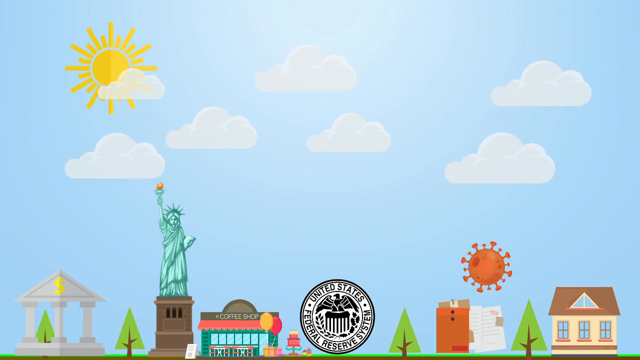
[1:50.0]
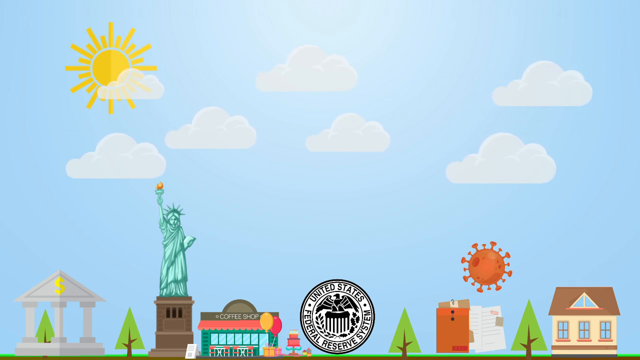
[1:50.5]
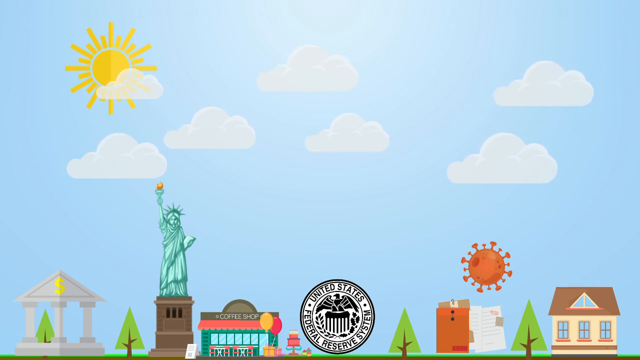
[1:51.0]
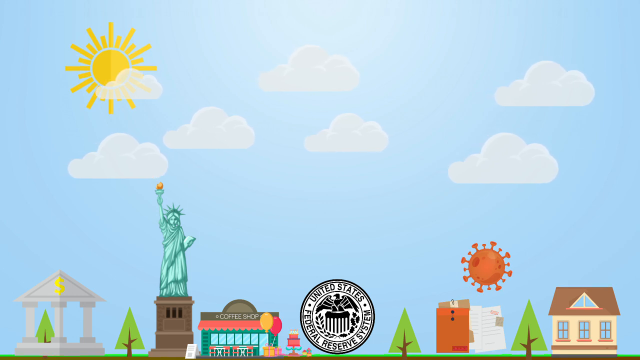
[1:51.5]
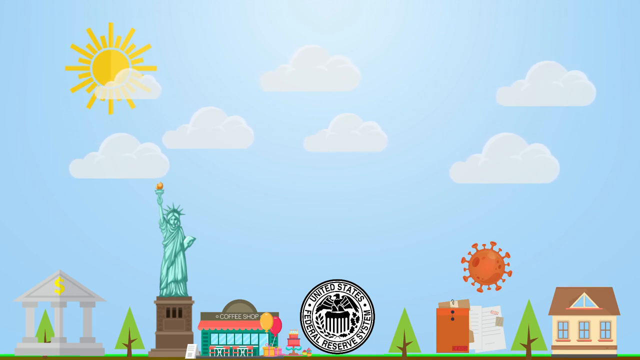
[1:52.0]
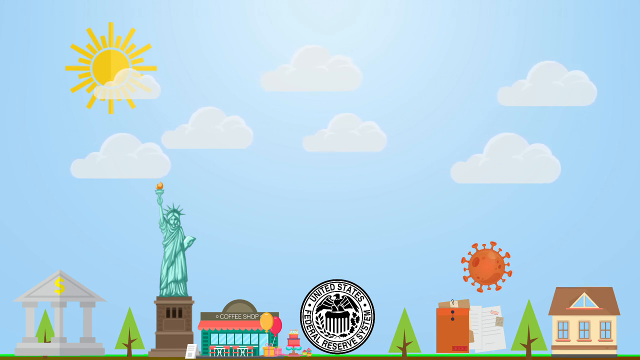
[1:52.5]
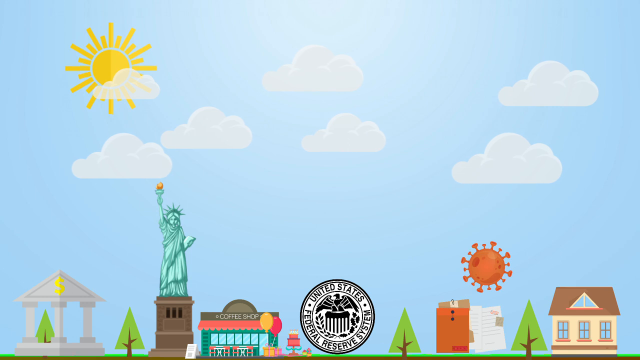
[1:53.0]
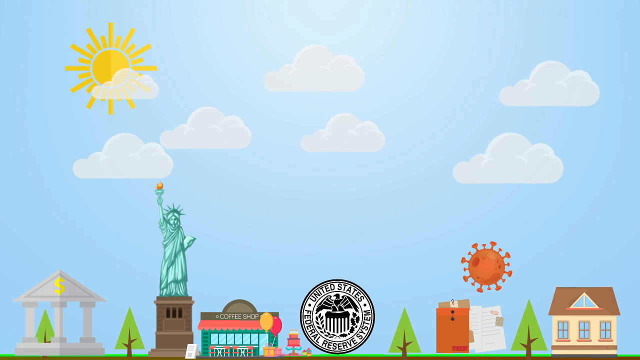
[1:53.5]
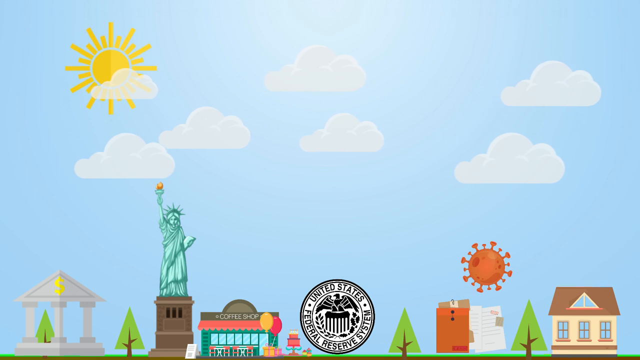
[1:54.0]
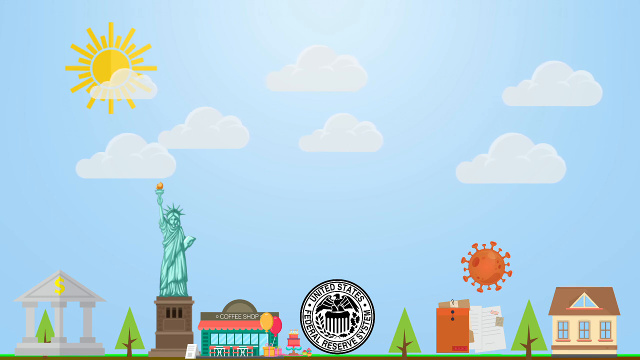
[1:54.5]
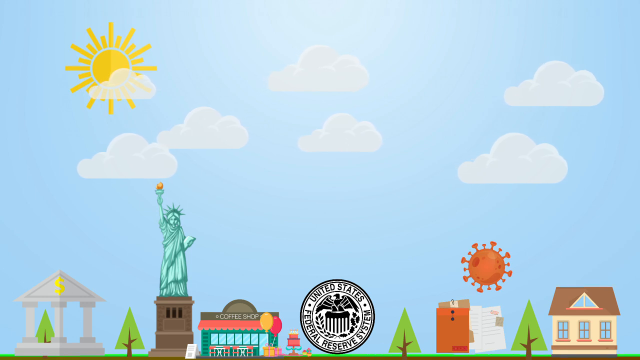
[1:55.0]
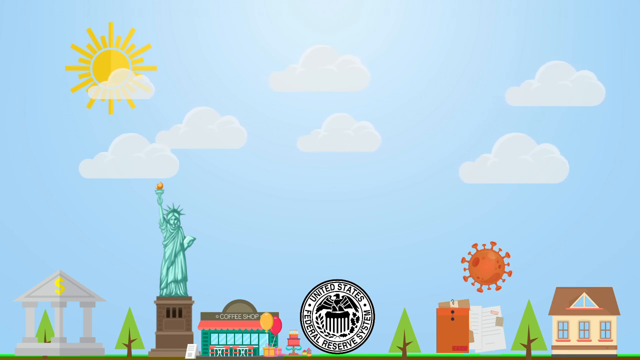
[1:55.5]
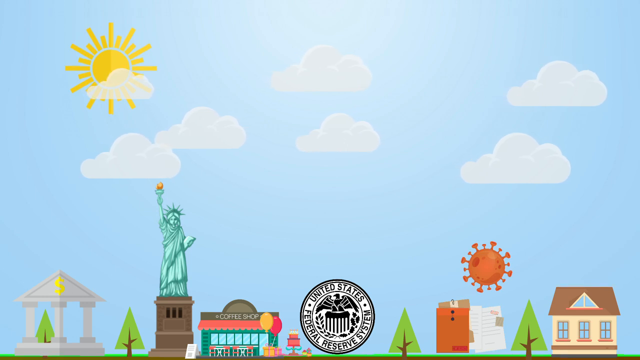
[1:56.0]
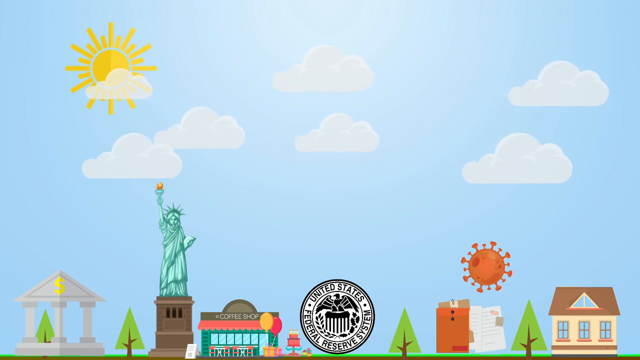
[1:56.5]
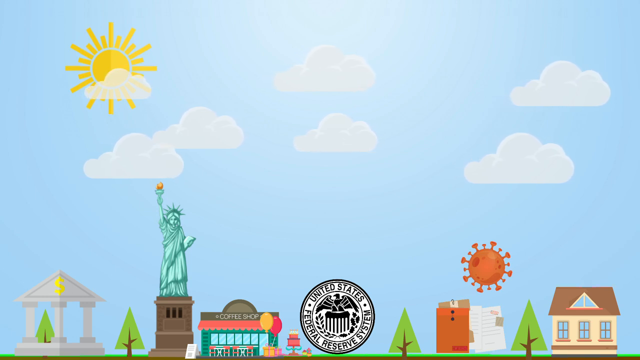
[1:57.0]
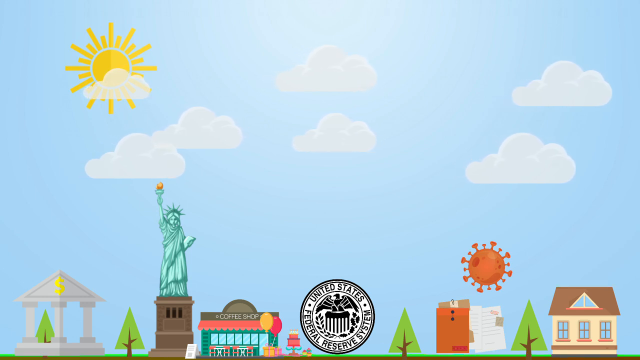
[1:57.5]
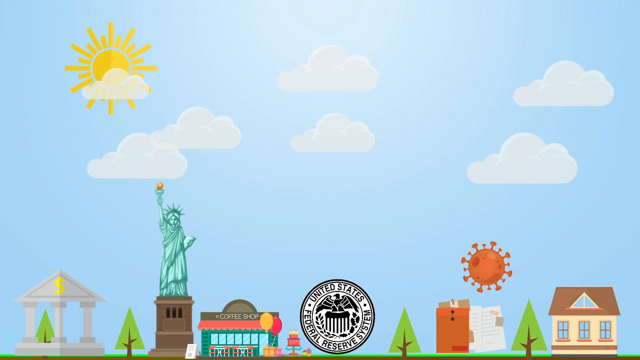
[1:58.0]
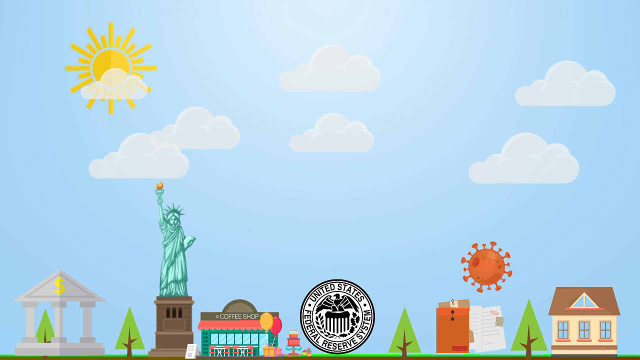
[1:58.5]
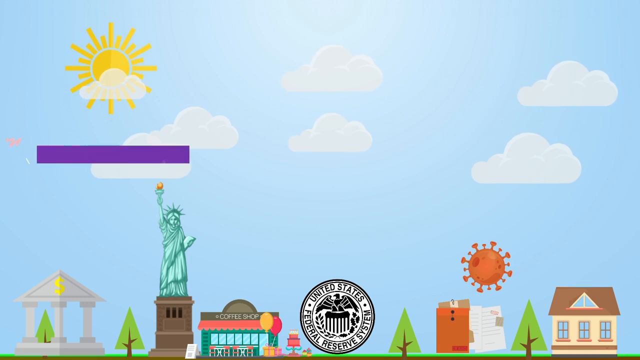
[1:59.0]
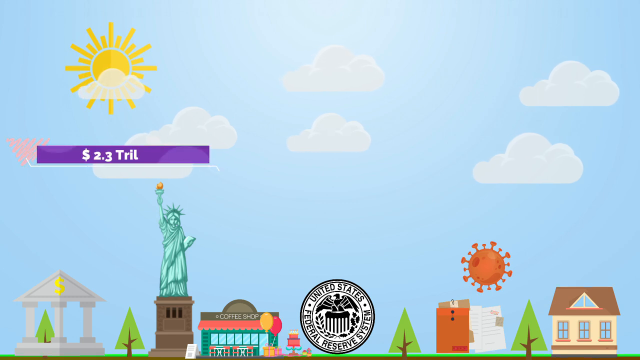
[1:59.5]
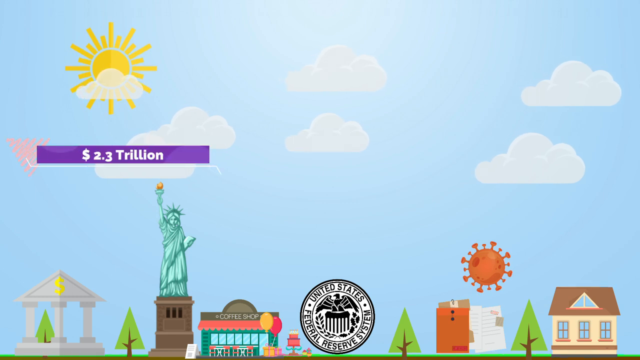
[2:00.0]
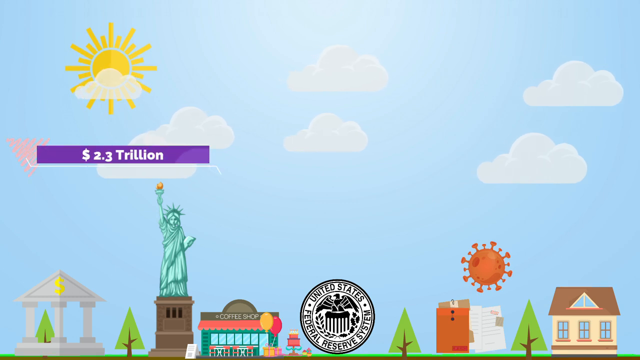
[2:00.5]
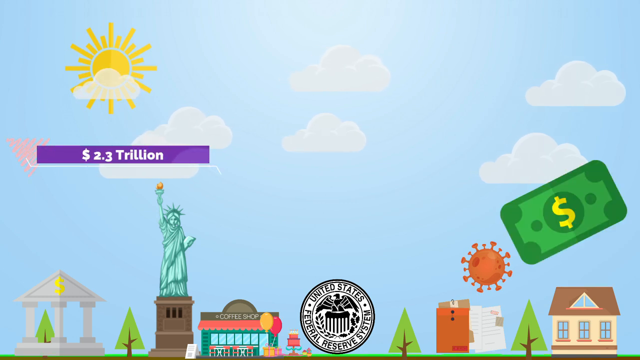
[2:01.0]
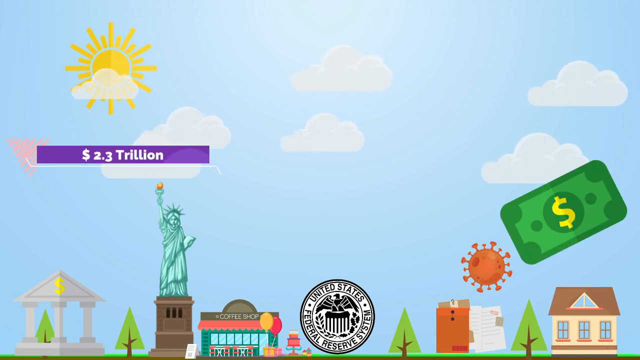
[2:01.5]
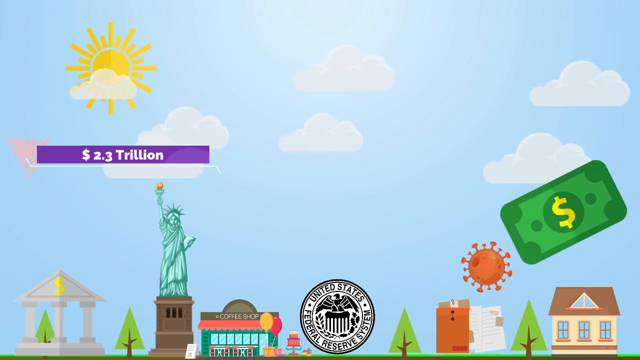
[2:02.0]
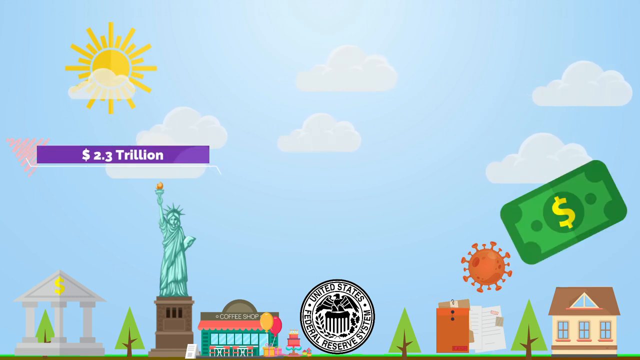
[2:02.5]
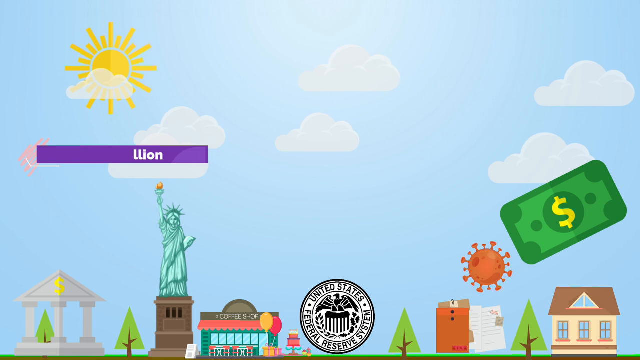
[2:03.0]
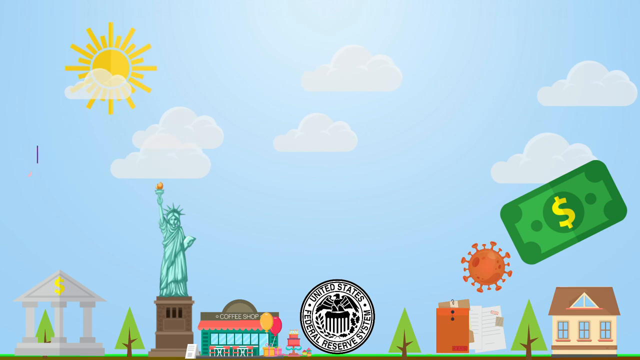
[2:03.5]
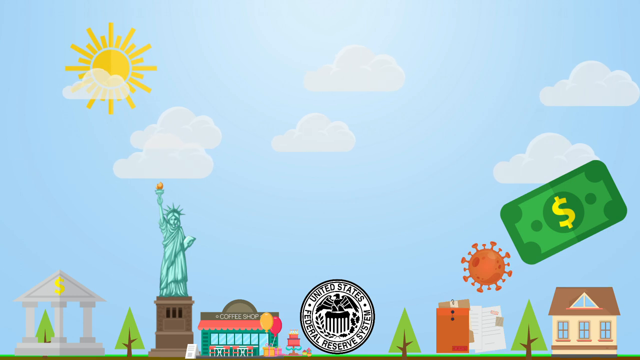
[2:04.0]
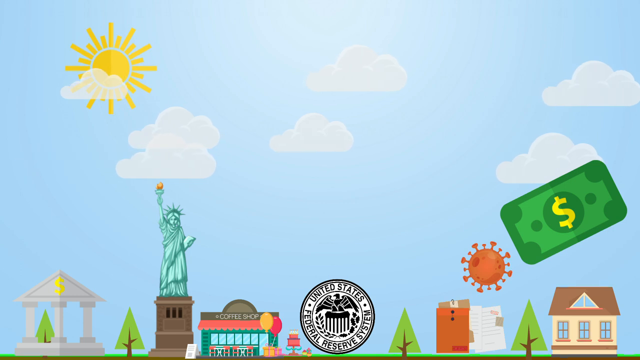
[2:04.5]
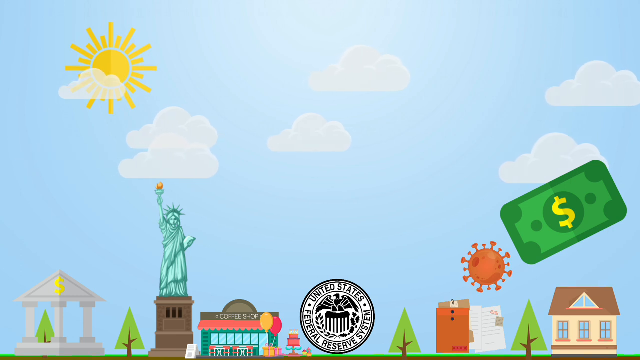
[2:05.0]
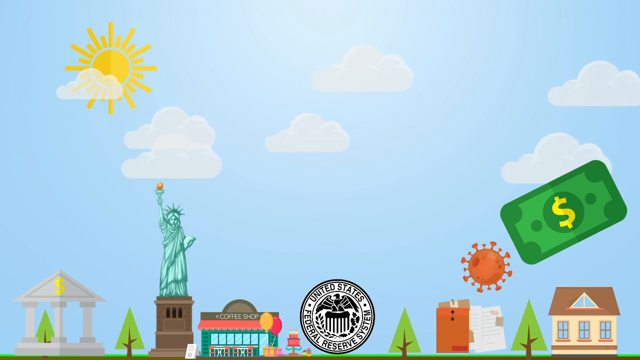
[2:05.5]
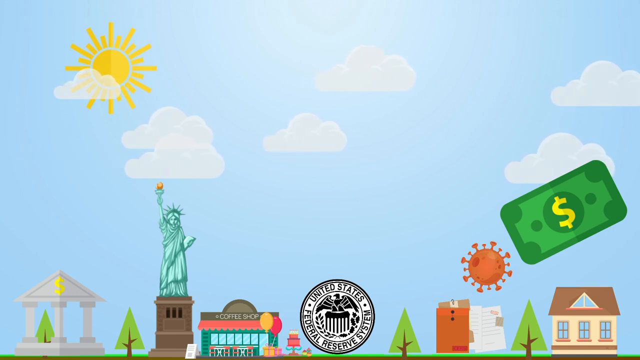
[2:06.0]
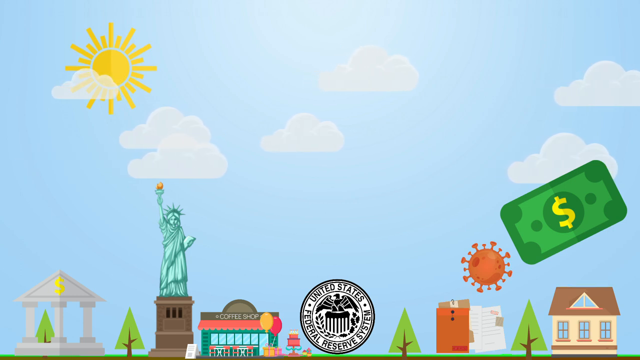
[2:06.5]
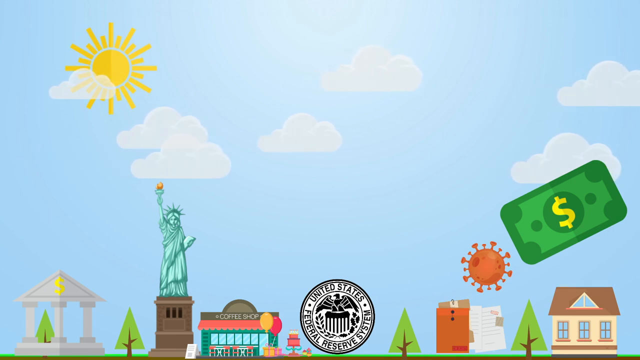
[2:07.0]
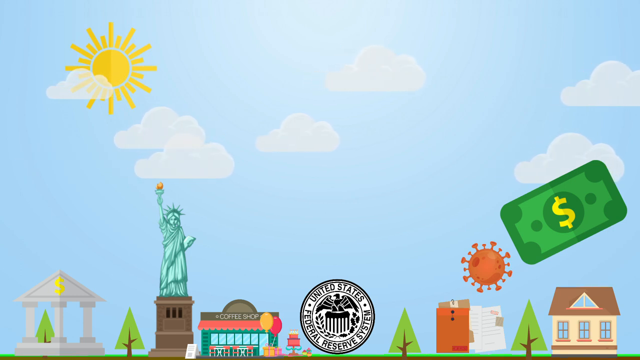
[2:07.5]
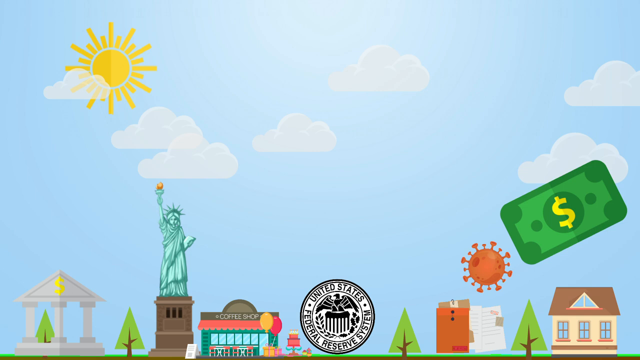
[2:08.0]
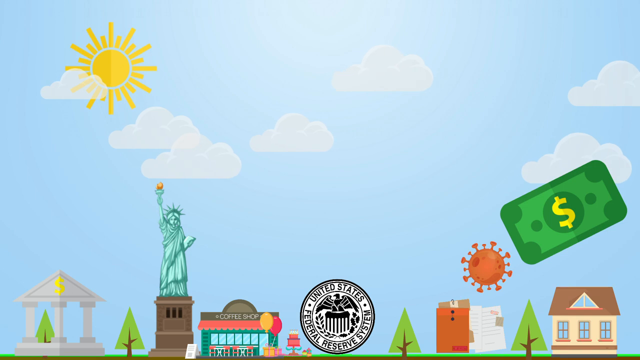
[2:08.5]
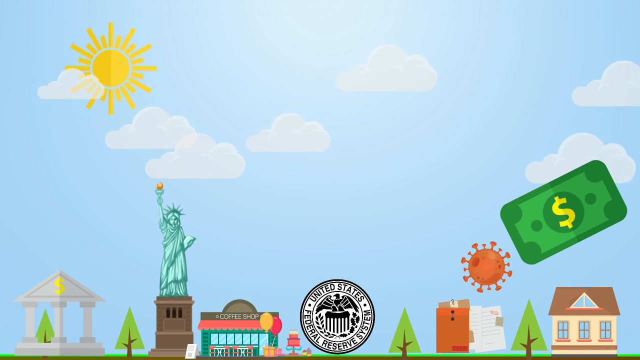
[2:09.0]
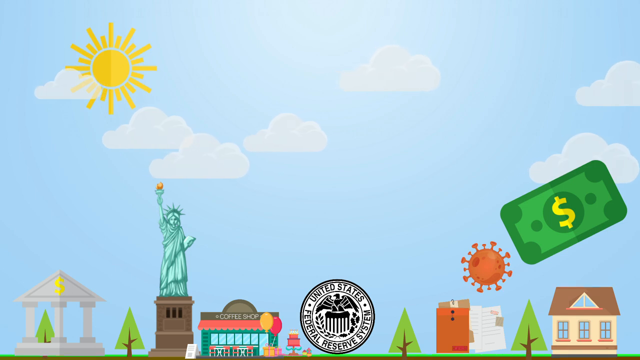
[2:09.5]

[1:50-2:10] The light blue sky still has seven fairly white clouds. The sun has two colors: dark gold on the left side and light gold on the right. At the bottom of the screen is a building that looks like a Colosseum, with a yellow dollar sign. Next to the building is the Statue of Liberty, with one hand stretched out holding a torch whose flame is a mix of red and yellow. The torch handle and the statue are green, and the statue has a crown and holds a book. There is also a coffee shop building in a coffee color, orange and green, with two inflated balloons, yellow and red, next to it. Next to the coffee shop is the circular emblem of the United States Federal Reserve System, with an eagle inside a circle in the middle, in a mixture of white and navy. Next to the emblem is a dossier with a few open papers, orange with a touch of dark brown. Slightly over the dossier is a red, circular virus-looking image with various spikes shooting out of it. At the bottom right of the video is a cream building with a brown roof, an attic with a window, and three additional windows. The clouds are moving from left to right. A banner flashes that says "$2.33 million" in white font on purple. A green dollar note image also flashes on the screen, with a yellow dollar sign in the middle. There are also four green pine trees with dark brown branches.